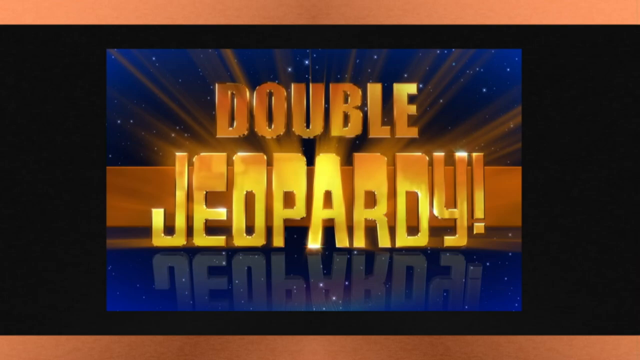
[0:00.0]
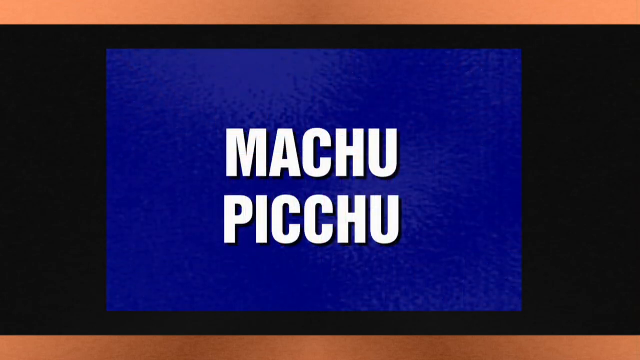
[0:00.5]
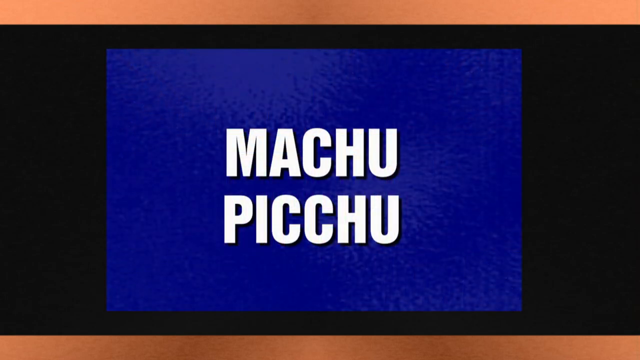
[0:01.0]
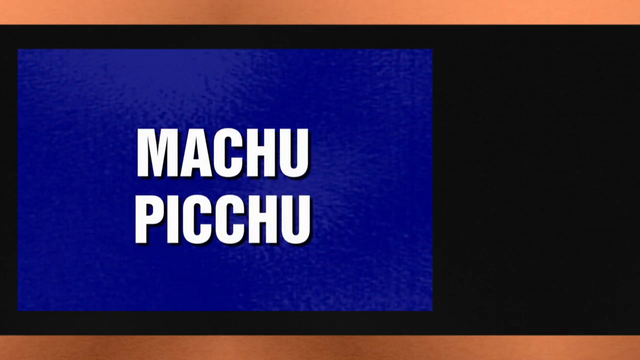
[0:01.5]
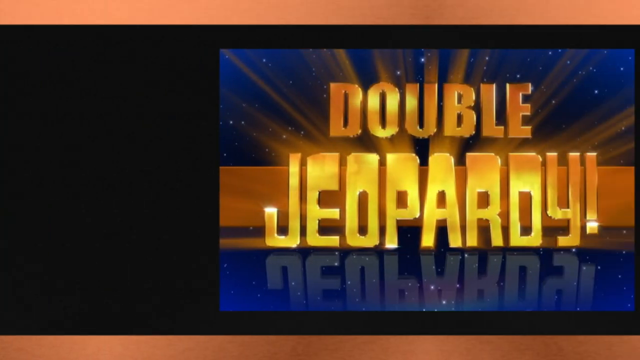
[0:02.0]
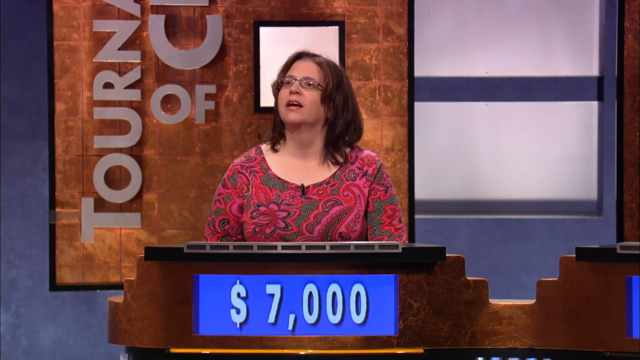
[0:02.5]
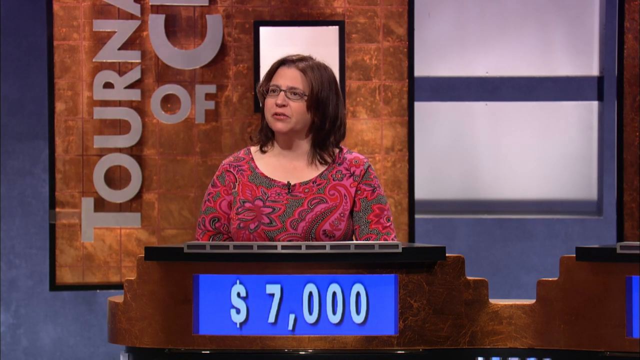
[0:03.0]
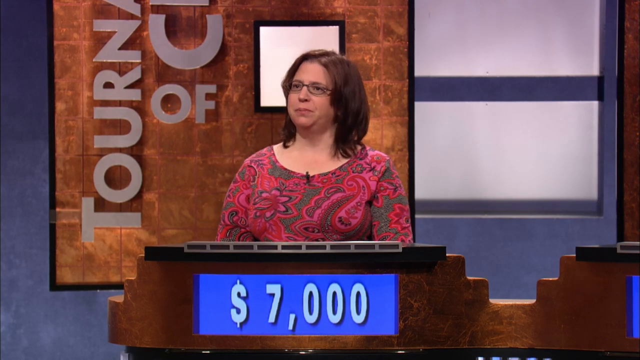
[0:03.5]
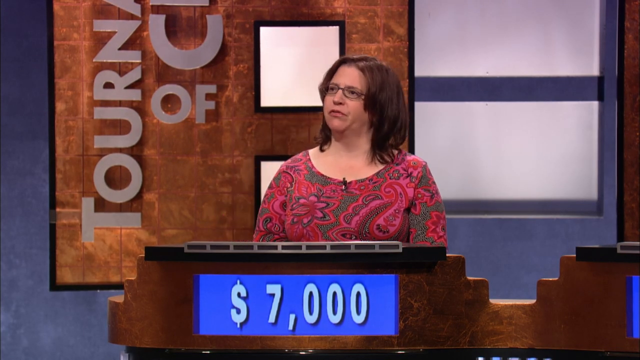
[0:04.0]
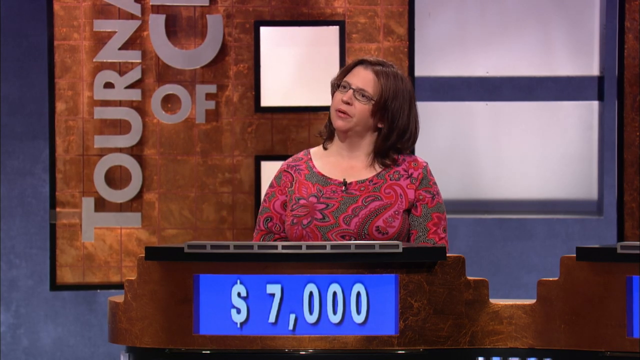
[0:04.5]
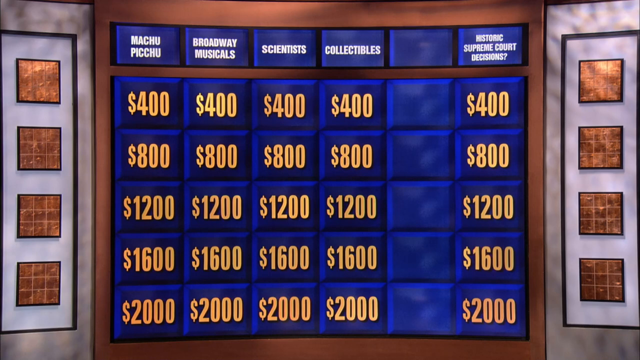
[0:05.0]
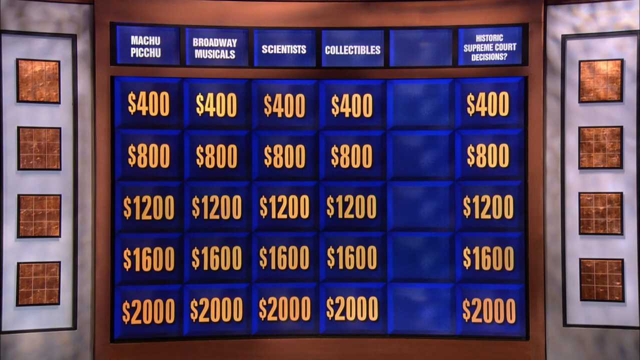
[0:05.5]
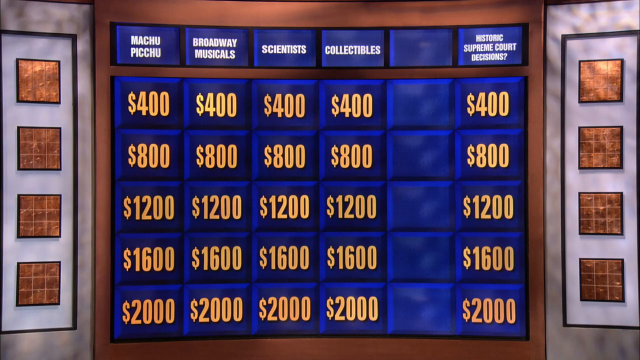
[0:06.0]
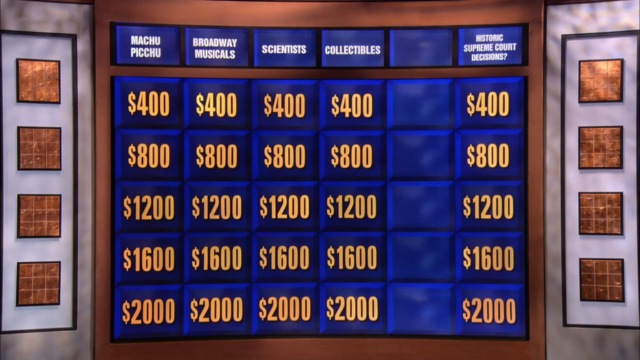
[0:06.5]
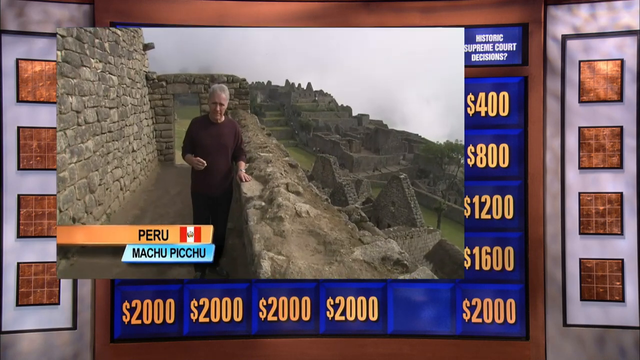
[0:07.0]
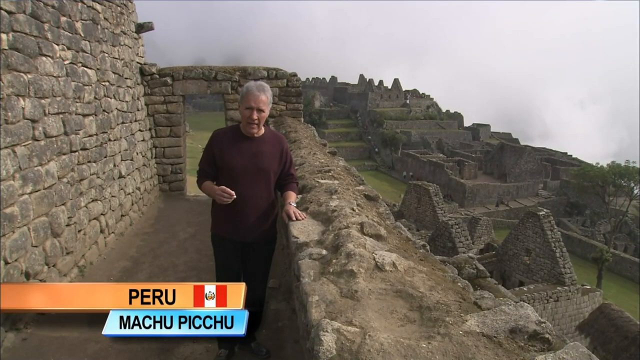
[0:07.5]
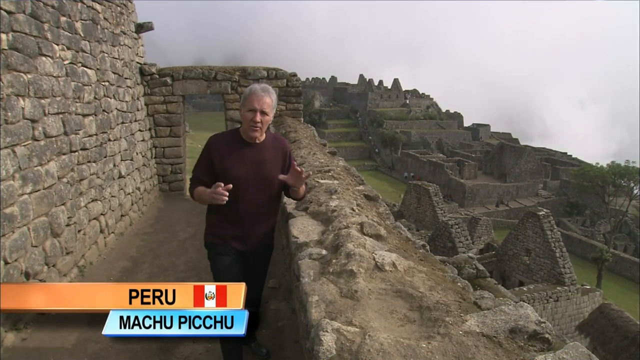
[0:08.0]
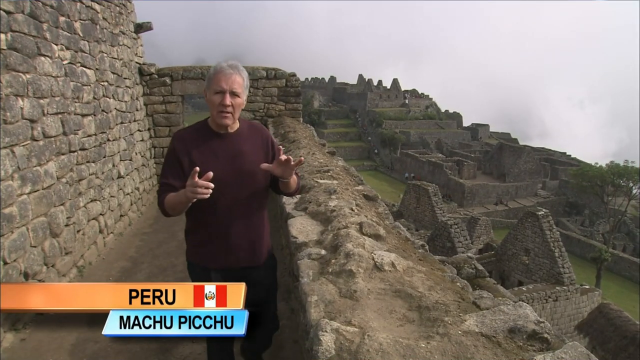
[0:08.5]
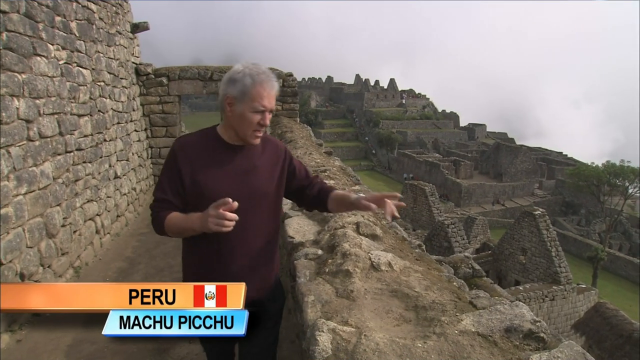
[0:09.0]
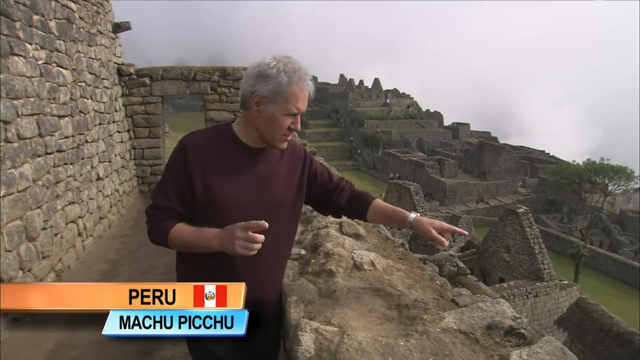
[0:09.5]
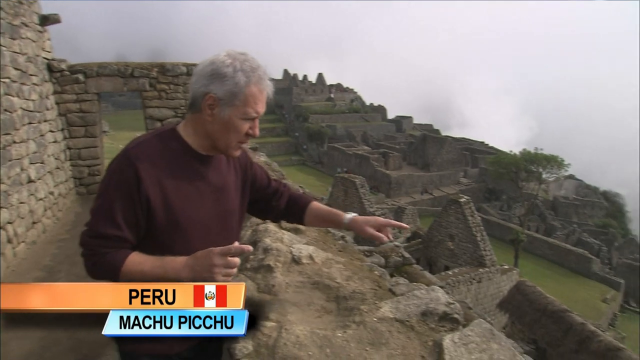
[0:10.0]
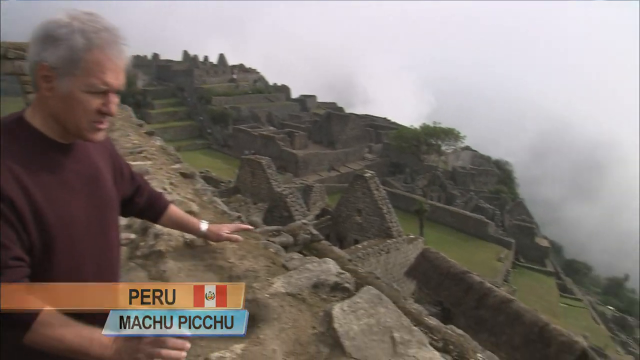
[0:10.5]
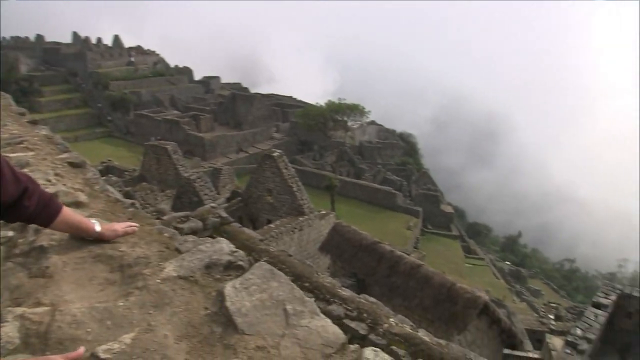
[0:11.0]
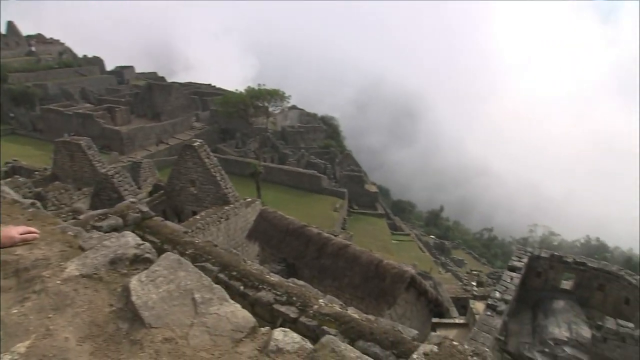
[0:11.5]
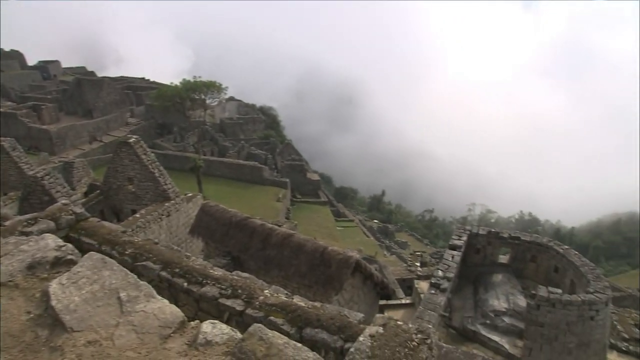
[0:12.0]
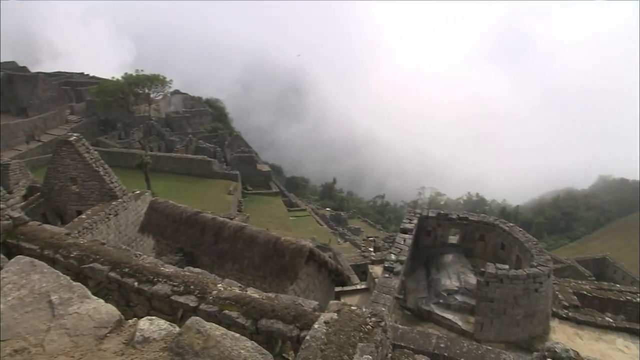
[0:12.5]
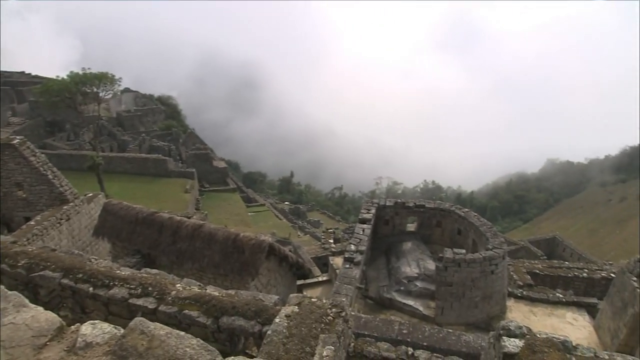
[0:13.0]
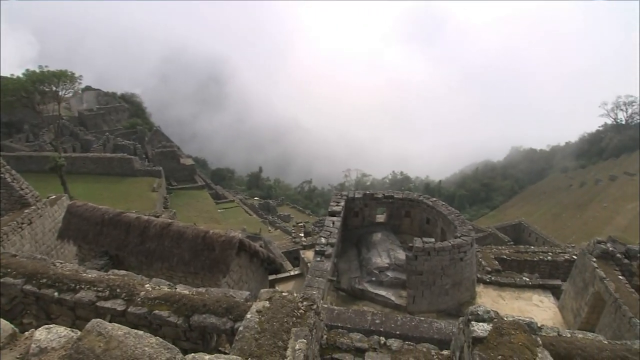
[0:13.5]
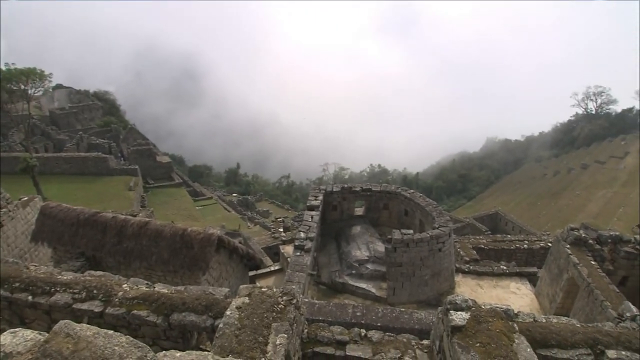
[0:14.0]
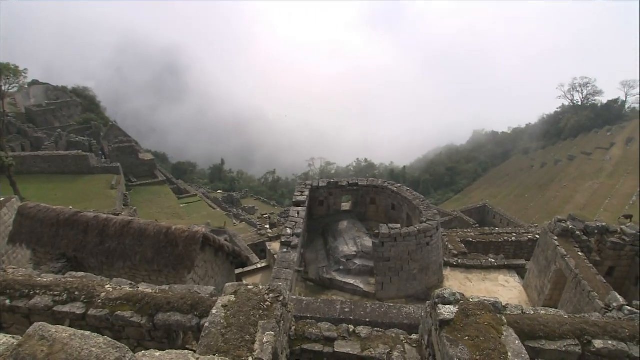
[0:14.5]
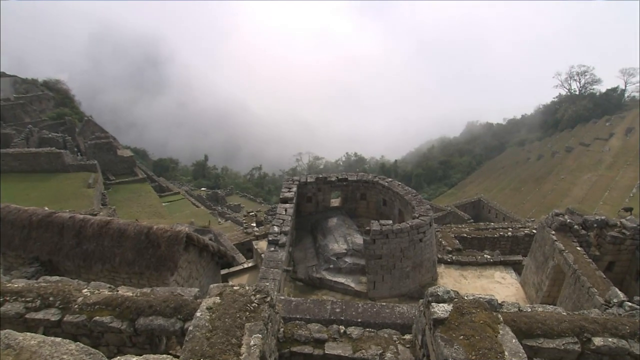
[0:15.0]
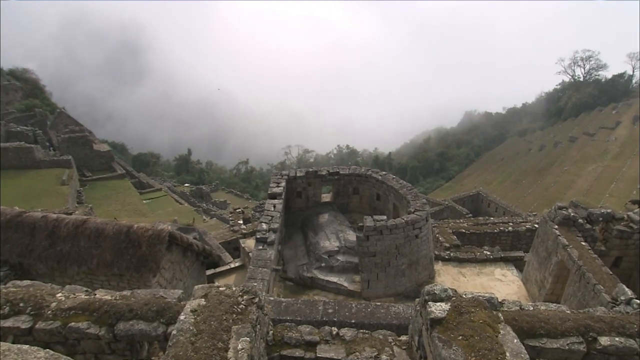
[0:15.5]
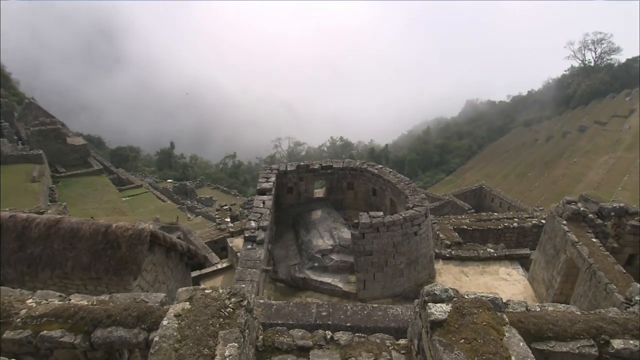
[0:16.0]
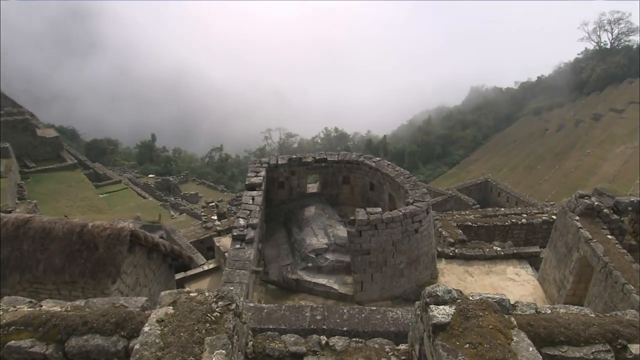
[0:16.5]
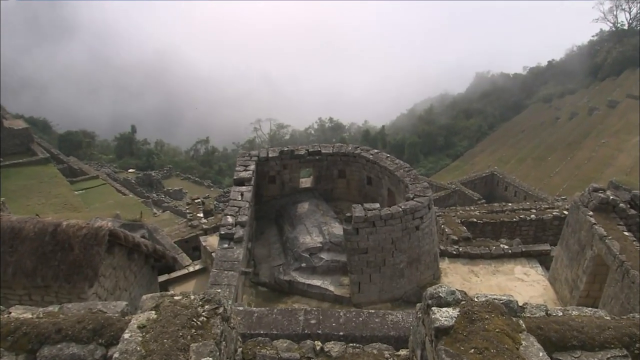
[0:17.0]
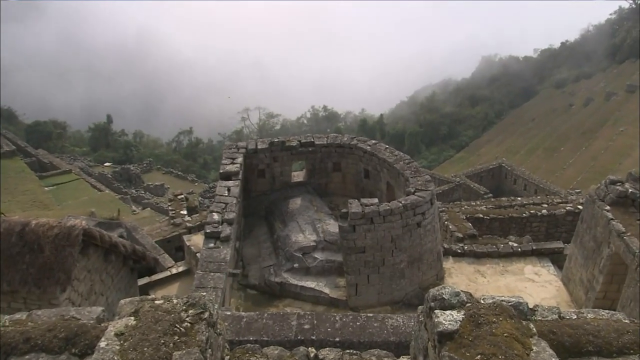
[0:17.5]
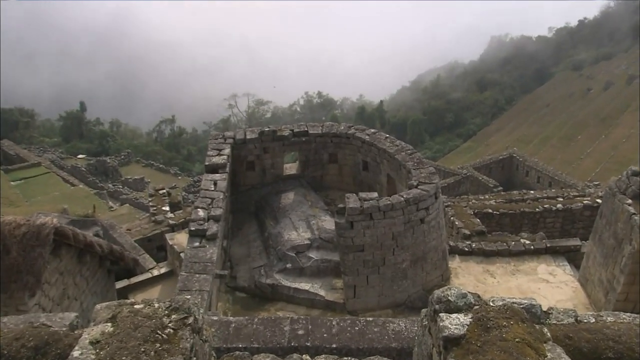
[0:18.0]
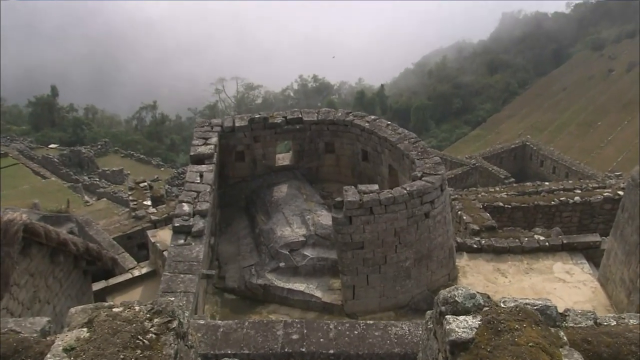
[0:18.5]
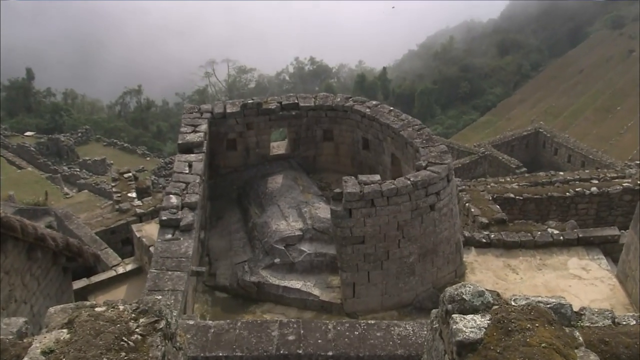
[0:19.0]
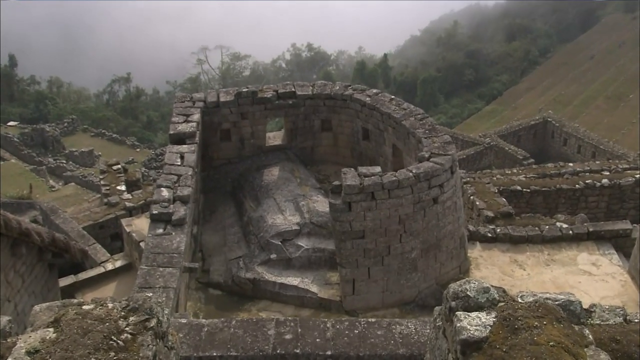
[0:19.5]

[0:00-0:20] The video is from Jeopardy, in the Double Jeopardy round. The screen reads "double" with a bigger "jeopardy" and an exclamation mark underneath. There is a blue bar, and a larger orange horizontal bar kind of behind "jeopardy," then a blue space and another smaller, slimmer orange bar. A reflection of "jeopardy" appears underneath it, and what look like rays come out of it. A blue screen follows, with a blue square reading "Machu Picchu" in white, and then the Double Jeopardy logo appears again. A female contestant is shown; the text seems to say "tournament of champs," but it is partly cut off. Her total of 7,000 is illuminated lower down. There is also a segmented meter showing how much time is left; as it runs out, there is less red. She wears glasses and a red, kind of flowery shirt. She tilts her head and picks a clue from the first category. Alex Trebek then appears in Peru. Below him to the right are what look like temples, almost like little A-frame structures of different sizes, along with grassy steps. He points at what he is describing. There appears to be a circular half wall with a few little windows, apparently on the left side, open at the bottom.